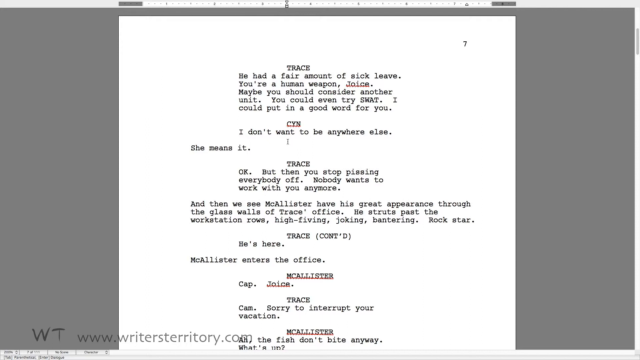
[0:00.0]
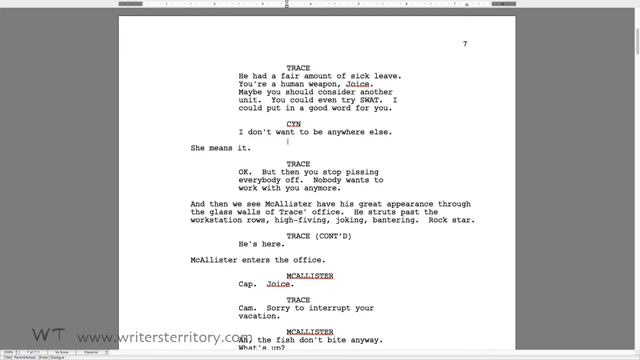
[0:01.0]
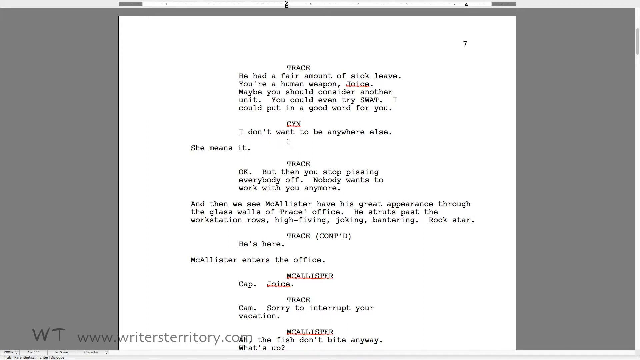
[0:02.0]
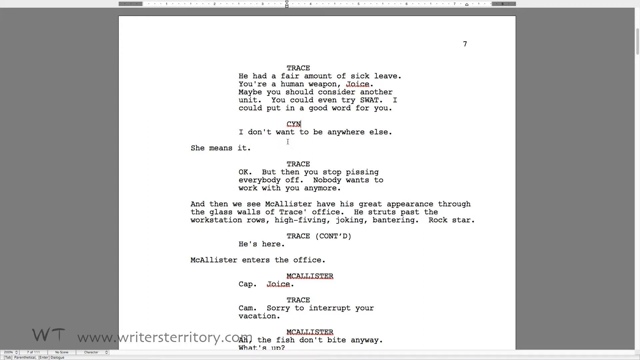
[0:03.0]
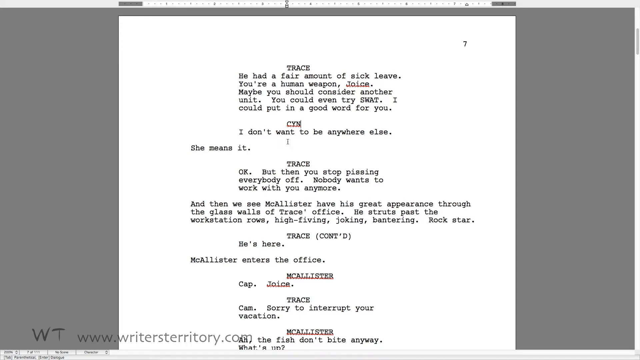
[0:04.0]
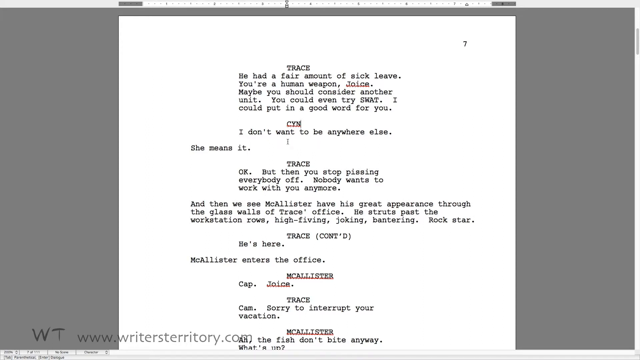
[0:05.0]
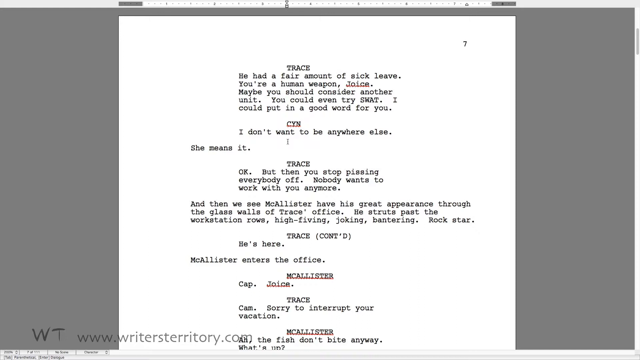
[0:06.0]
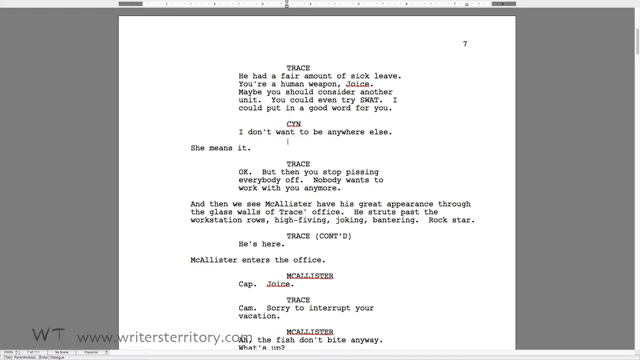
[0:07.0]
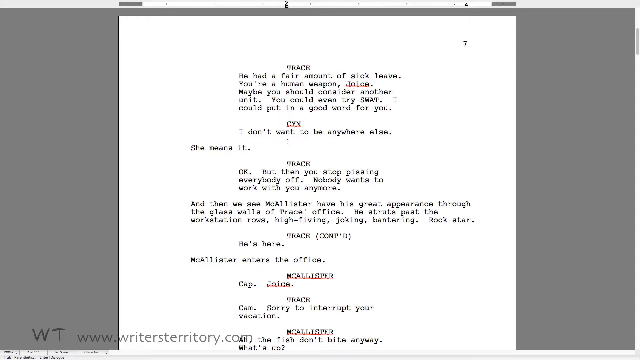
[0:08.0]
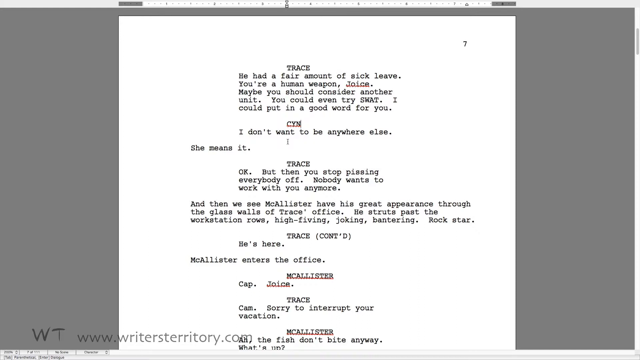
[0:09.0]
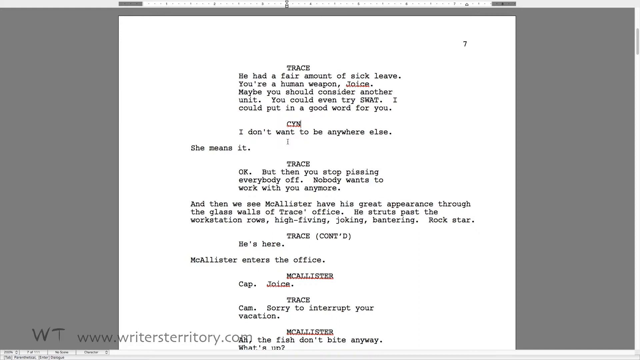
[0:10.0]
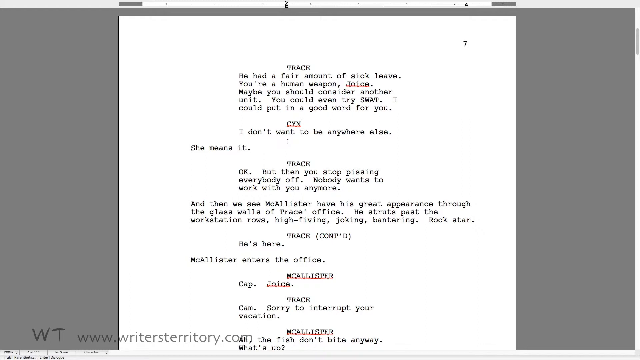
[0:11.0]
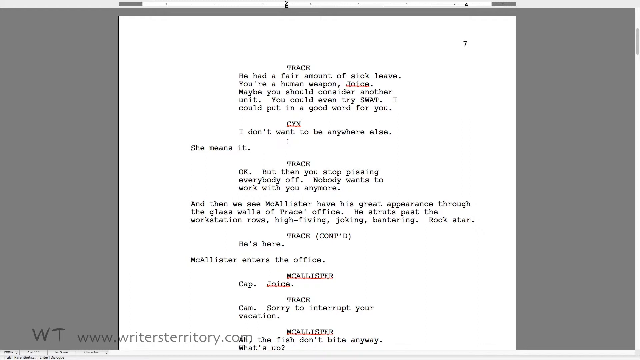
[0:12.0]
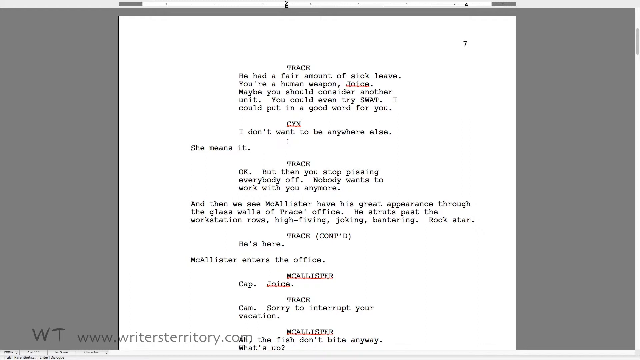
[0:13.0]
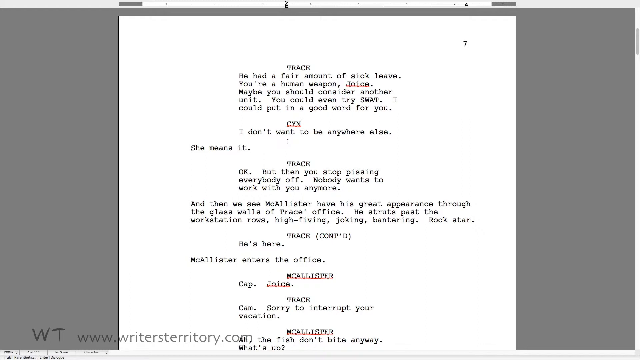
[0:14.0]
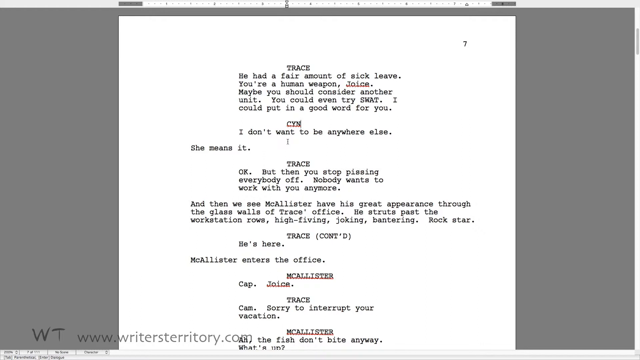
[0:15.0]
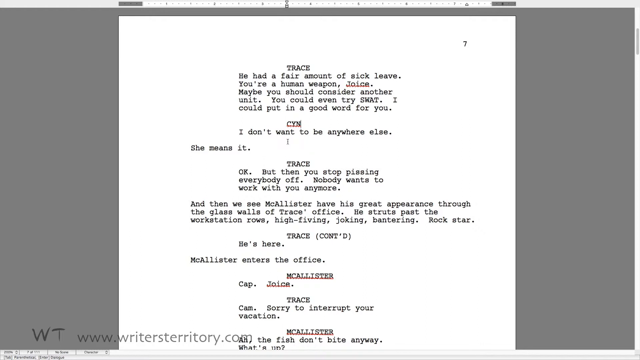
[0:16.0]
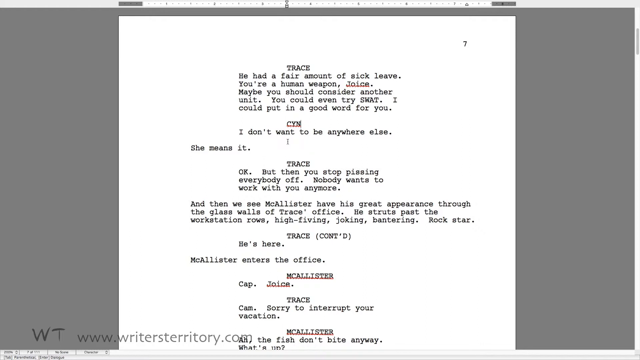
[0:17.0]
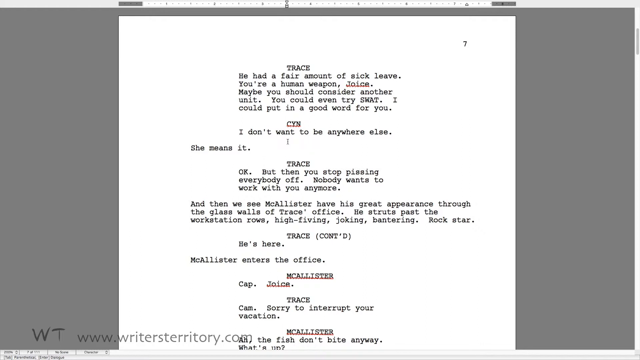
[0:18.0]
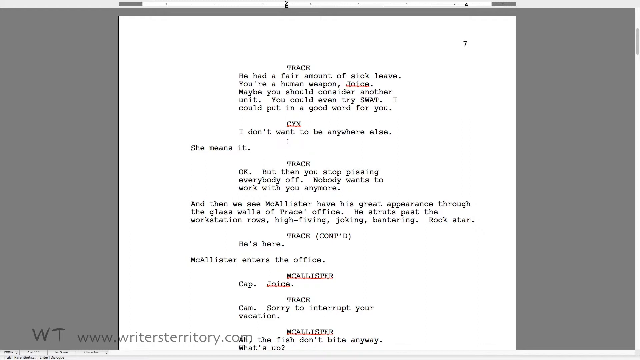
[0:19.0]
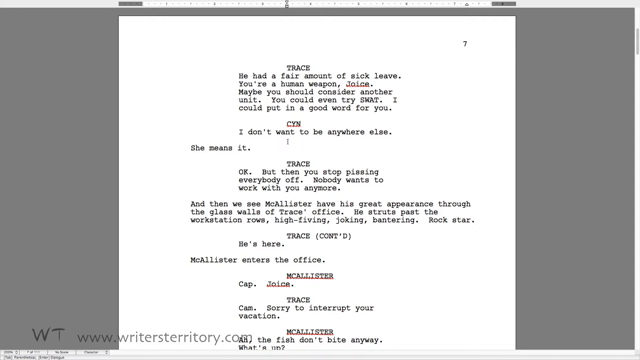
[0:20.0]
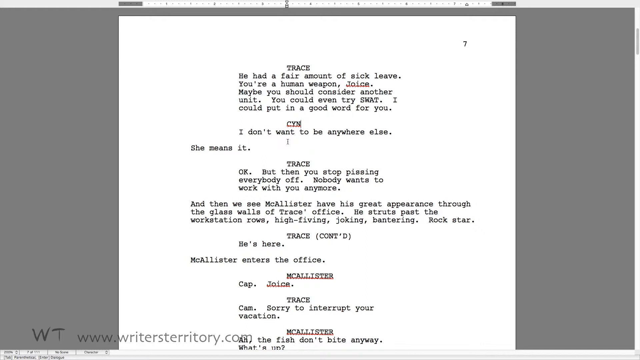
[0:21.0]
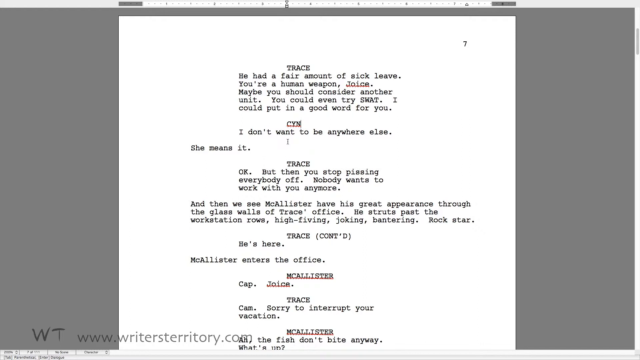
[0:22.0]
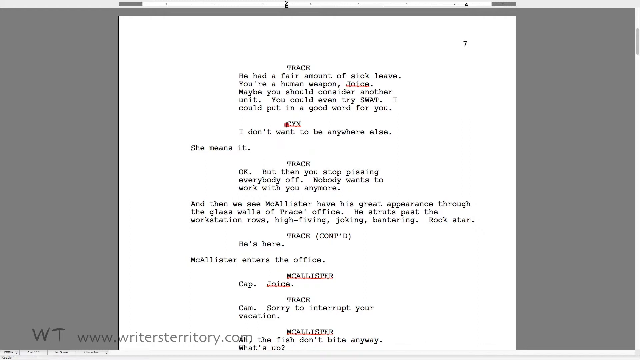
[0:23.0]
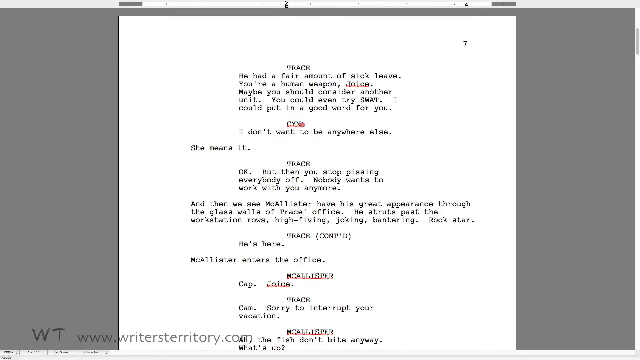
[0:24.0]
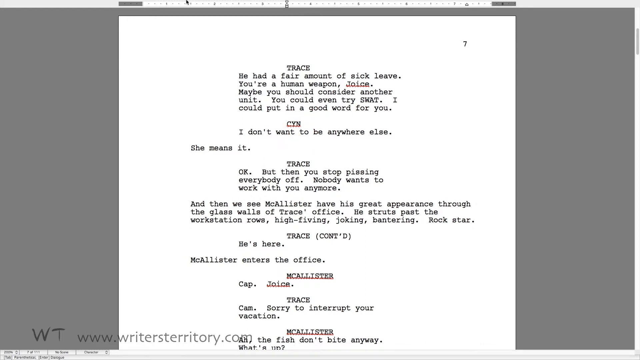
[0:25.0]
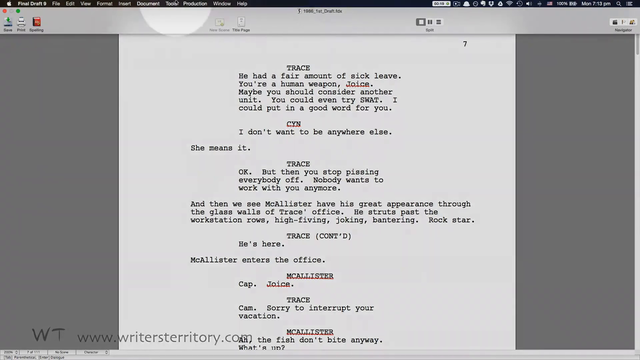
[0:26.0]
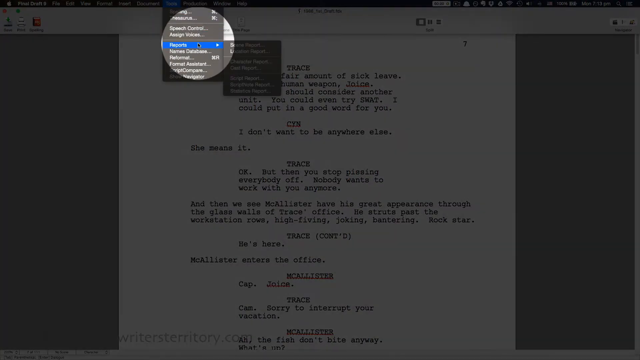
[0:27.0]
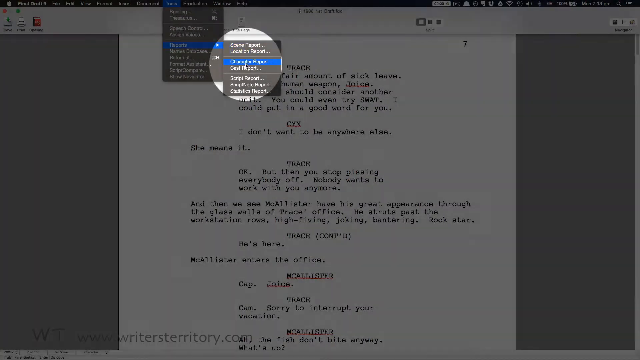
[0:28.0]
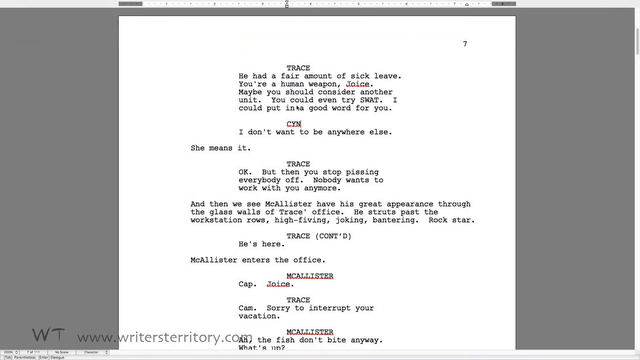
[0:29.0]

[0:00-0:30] The screen shows a document that looks like some kind of movie script, with indented text. A ruler runs across the top with the indentation mark roughly between the three and the four. The white document has gray all around it. At the top right is a 7, probably the page number. A few lines down, "trace" appears in small caps. Below it and a little to the left, at about two and a half on the ruler, a line reads "you had a fair amount of sick leave you're a human weapon Joice. Maybe you should consider another unit you could even try SWAT. I could put in a good word for you". Further down is "CYN", and the script continues with "trace", "CYN", "trace" and "Macalester". A red squiggly mark appears under what is apparently "Joice" and under "CYN". The Apple menu bar at the very top shows "file", "edit", "view" and a few other menus. The user clicks a menu and a list appears, with a spotlight-like highlight over items as the pointer moves down. The current item is highlighted in blue and has a right arrow that opens a submenu. The user clicks "character report", and a pop-up box labeled "select a character" appears. The user scrolls down the list.